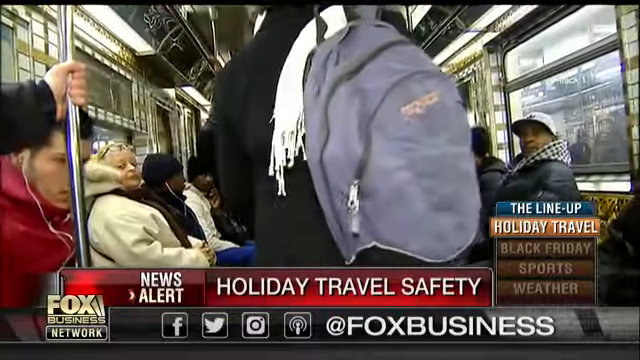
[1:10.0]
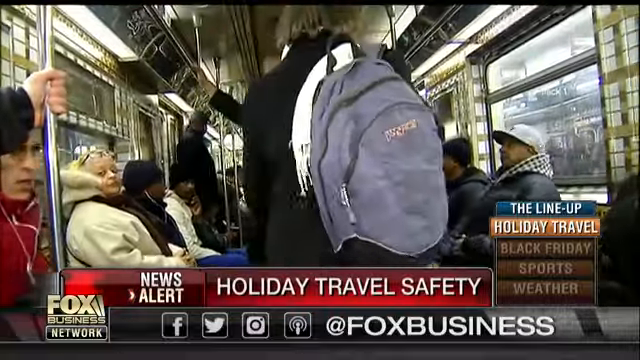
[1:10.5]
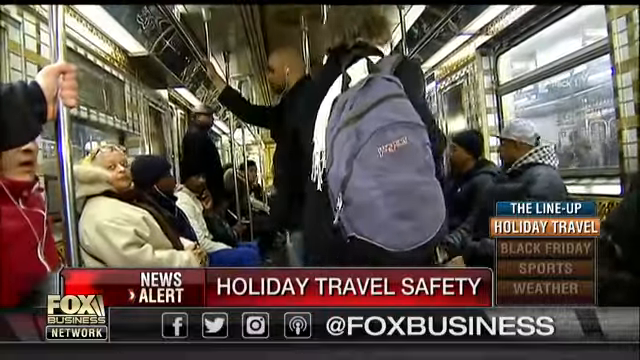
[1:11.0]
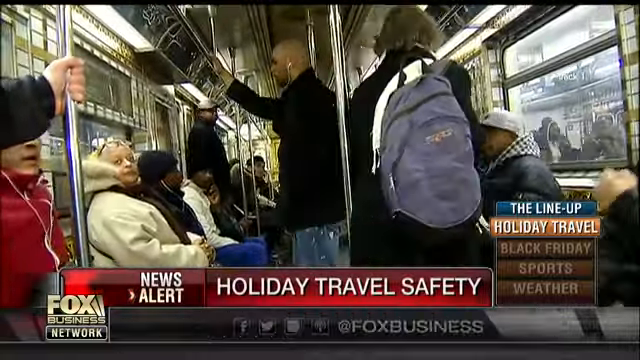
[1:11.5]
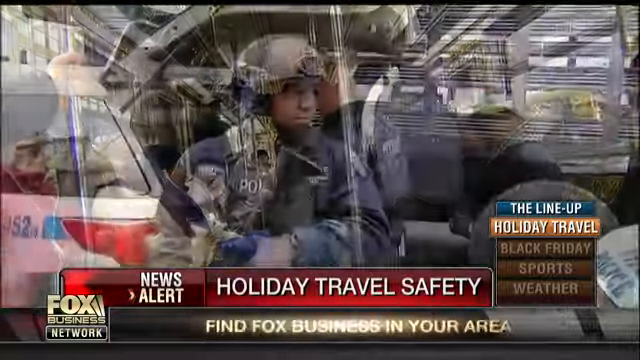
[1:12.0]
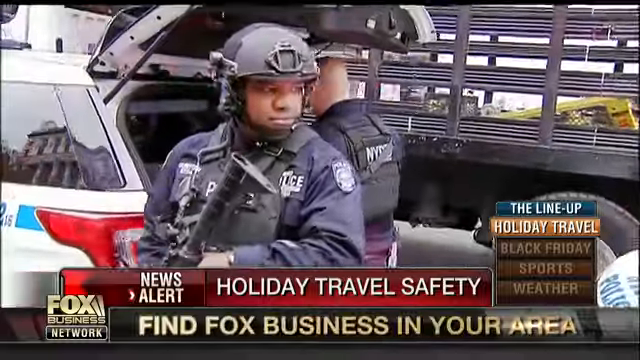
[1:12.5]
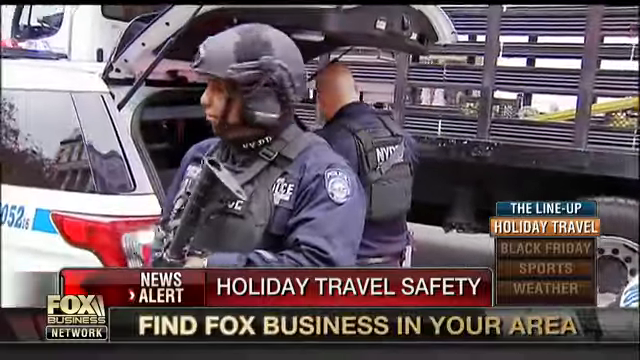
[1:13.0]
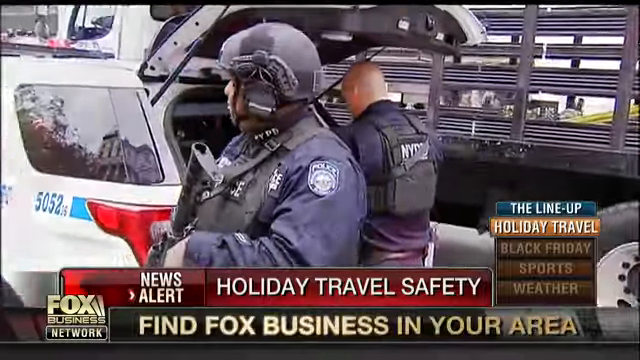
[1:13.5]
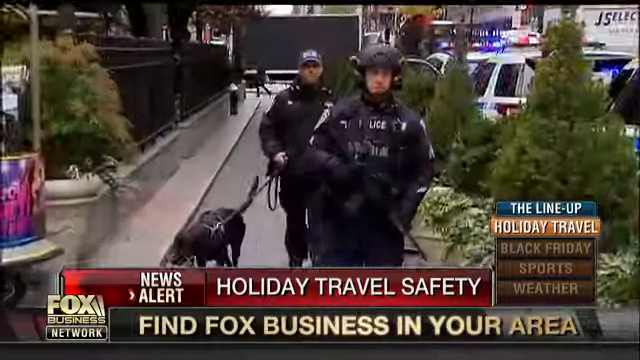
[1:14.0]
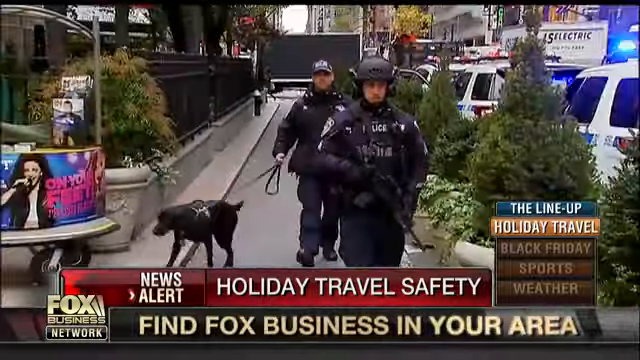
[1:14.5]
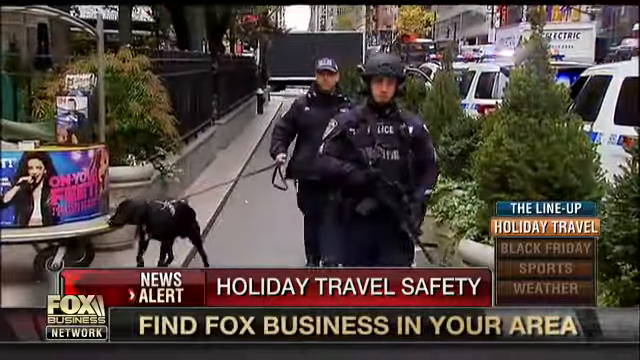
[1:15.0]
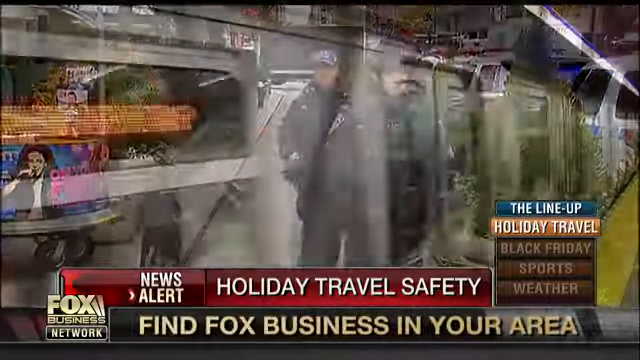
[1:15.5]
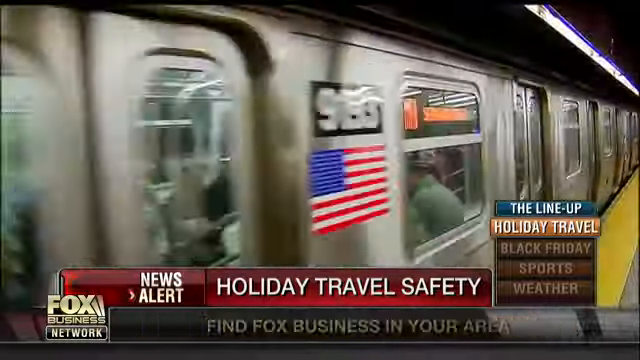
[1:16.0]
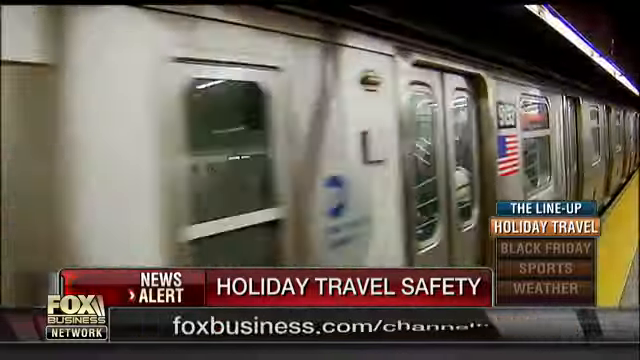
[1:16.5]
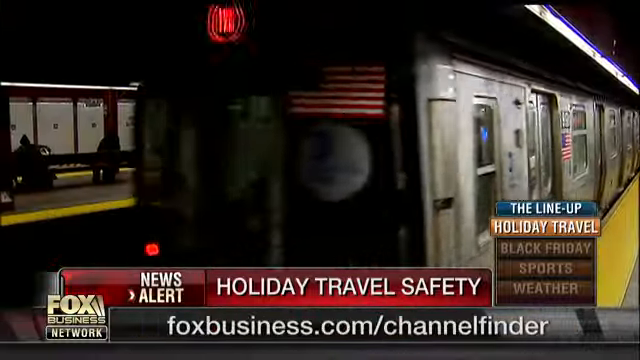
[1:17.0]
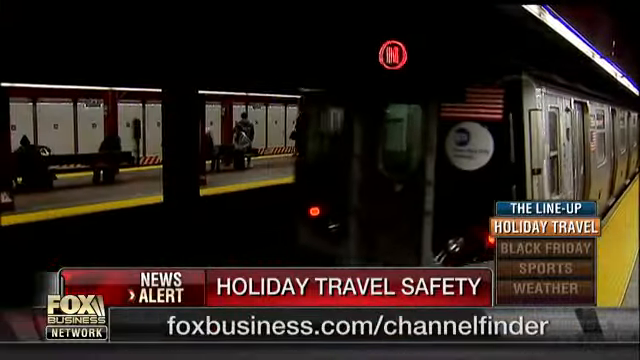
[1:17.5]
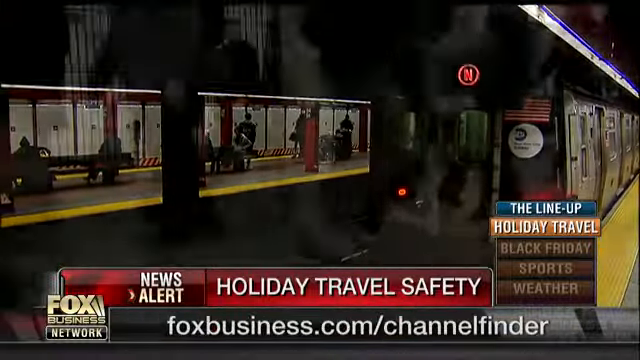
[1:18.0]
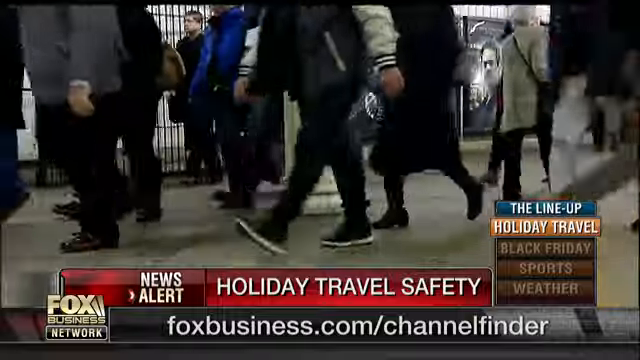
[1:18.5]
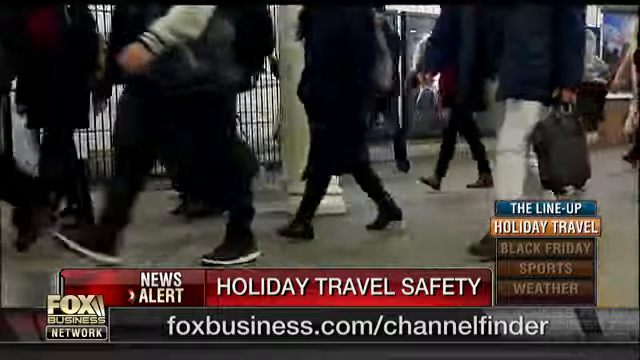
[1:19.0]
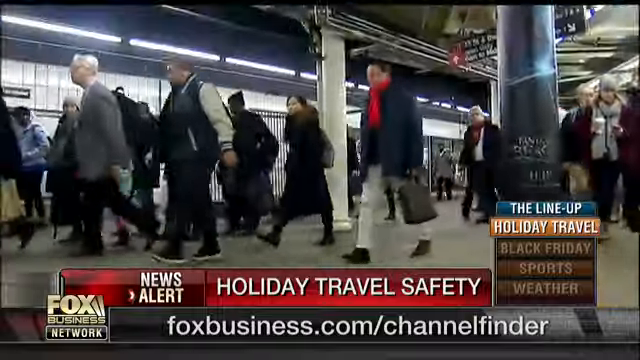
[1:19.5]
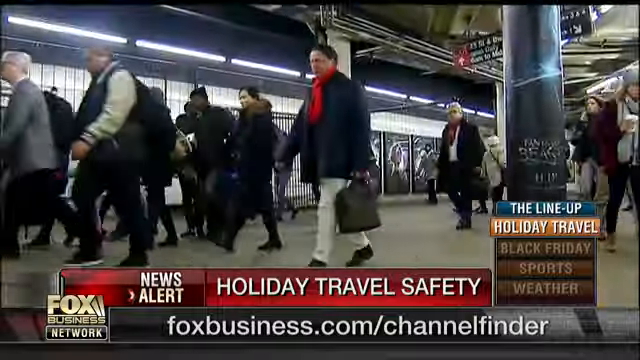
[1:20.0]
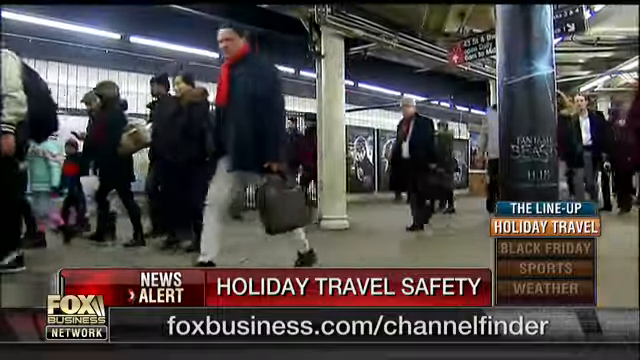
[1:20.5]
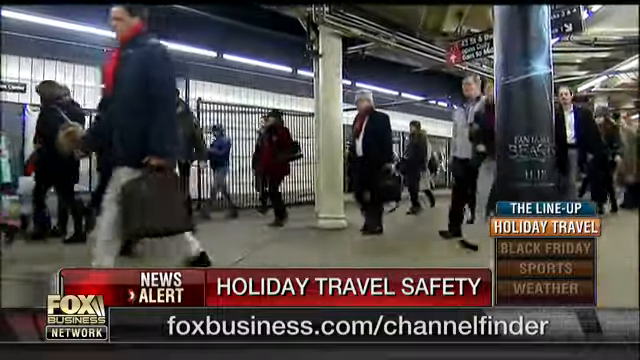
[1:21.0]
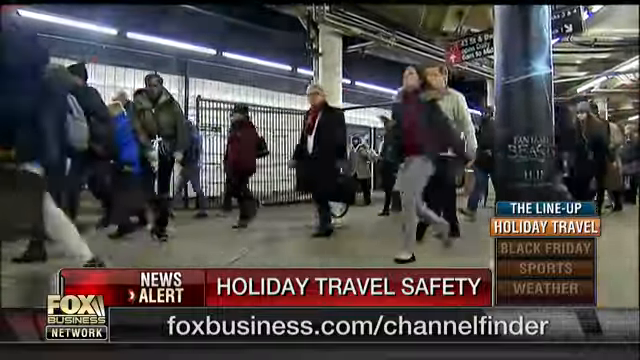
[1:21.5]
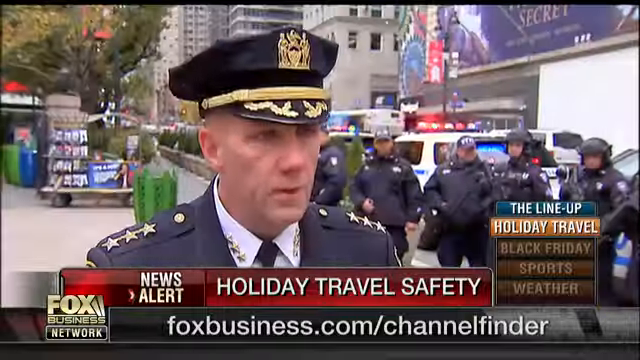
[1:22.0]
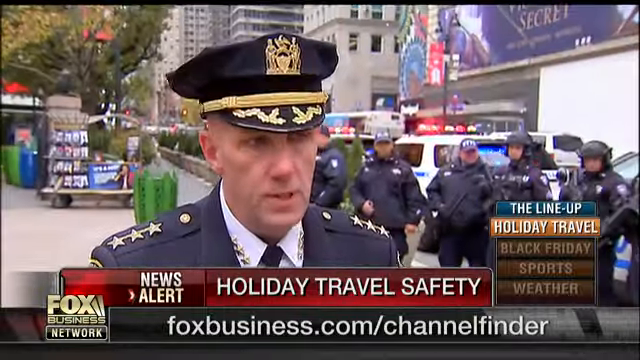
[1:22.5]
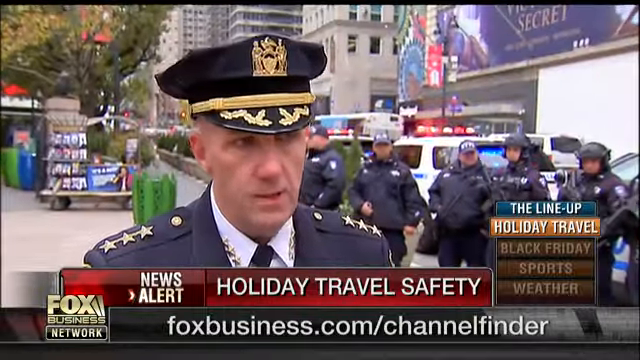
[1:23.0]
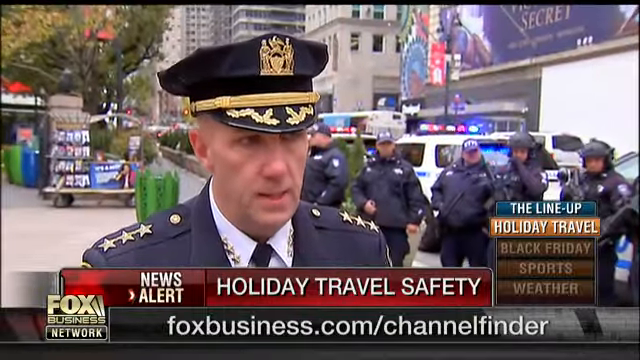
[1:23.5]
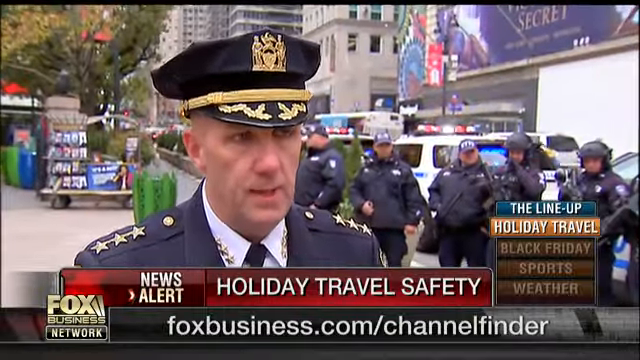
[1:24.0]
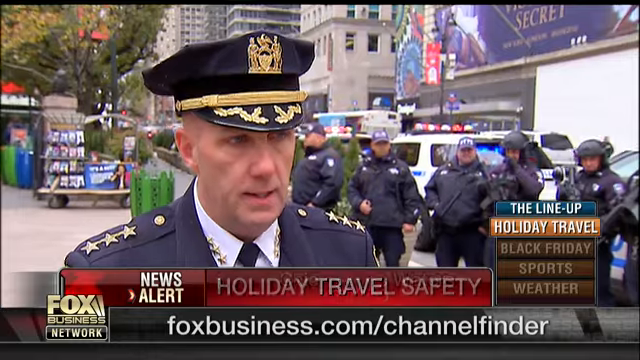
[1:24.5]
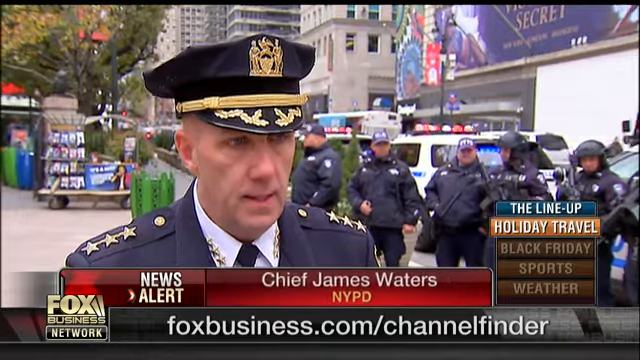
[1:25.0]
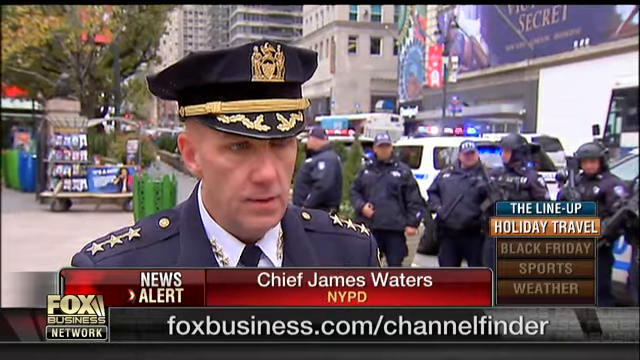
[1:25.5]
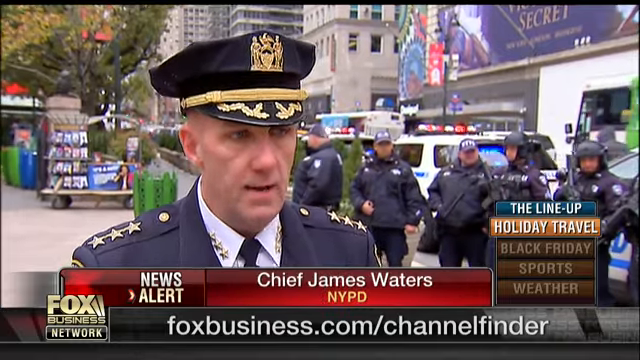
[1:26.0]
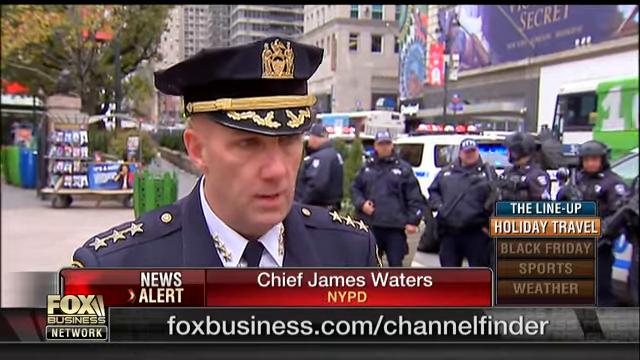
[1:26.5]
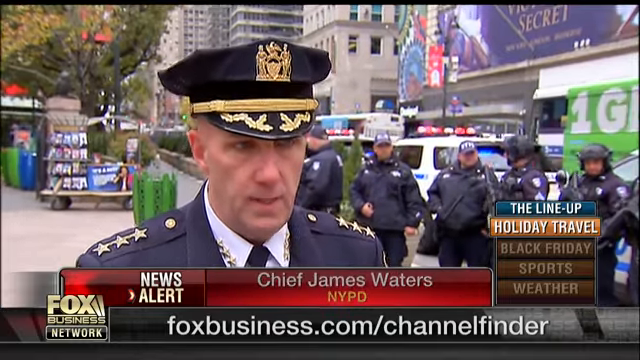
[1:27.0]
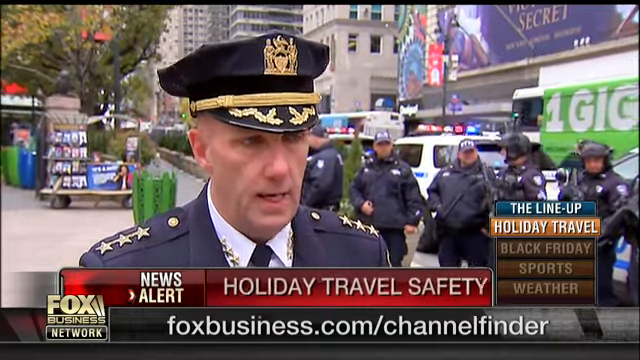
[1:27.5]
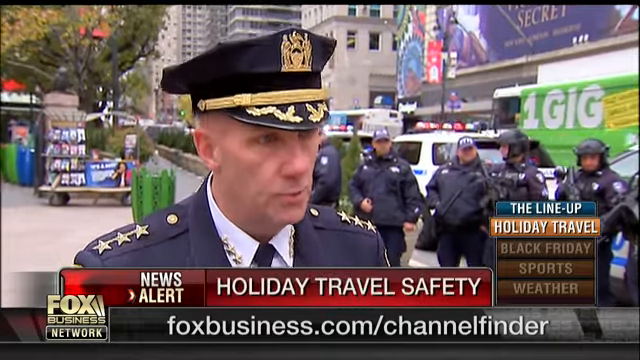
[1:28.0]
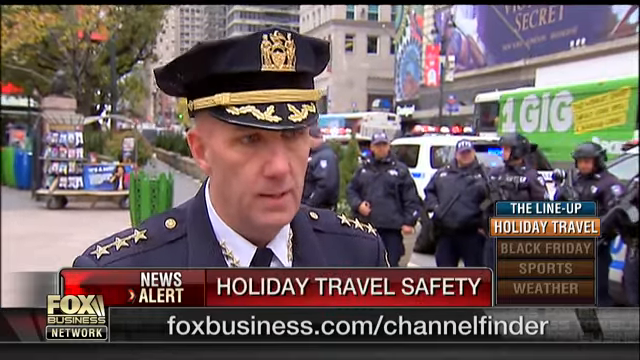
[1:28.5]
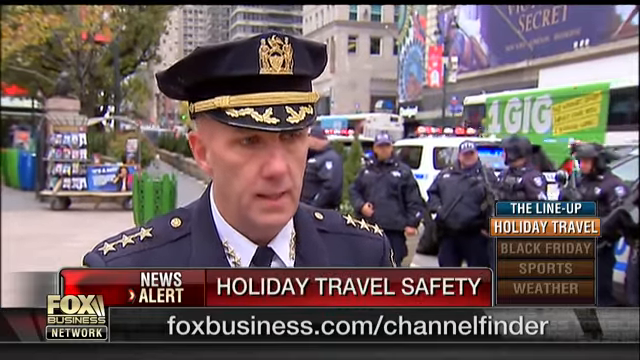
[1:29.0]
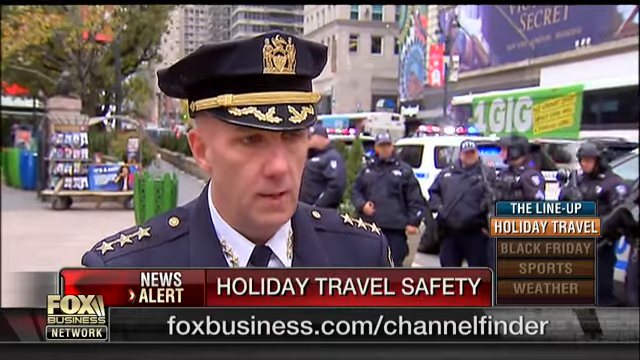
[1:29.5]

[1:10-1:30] The back of a person with a backpack on the subway is shown as they try to find a seat. The scene cuts to NYPD police outside with their vehicle's boot open; one officer holds a gun and looks out while the other looks in the boot of his police car. Next is a busy NY street with police cars lined up against the road and two police officers walking towards the camera, one with a gun and the other with a dog. The scene cuts to the busy subway station, where the train leaves the platform, moving away from the camera, and then to the busy subway station with people walking up and down. Finally an NYPD officer named Chief James Waters appears, with a busy street behind him full of traffic, some police cars lined up and officers in the background.